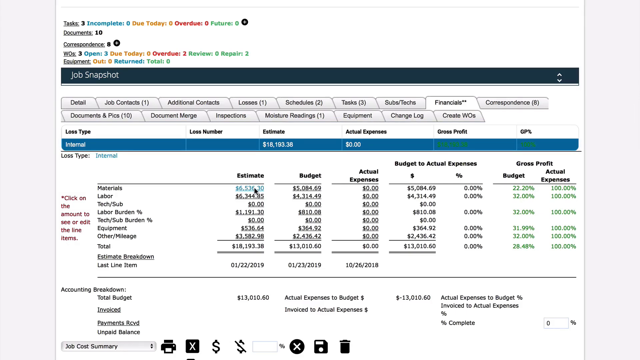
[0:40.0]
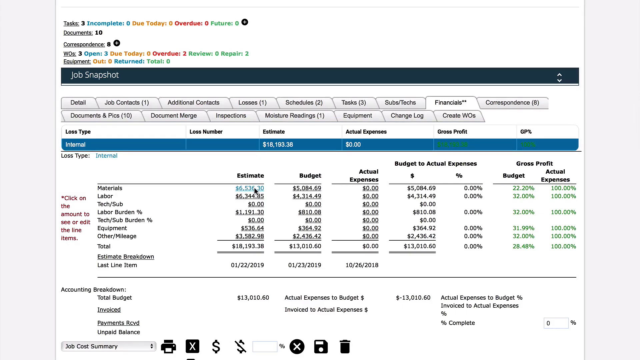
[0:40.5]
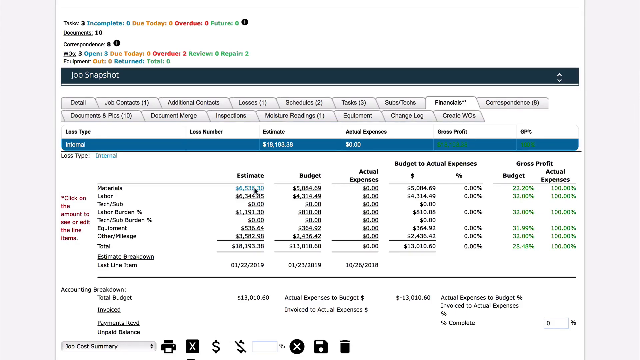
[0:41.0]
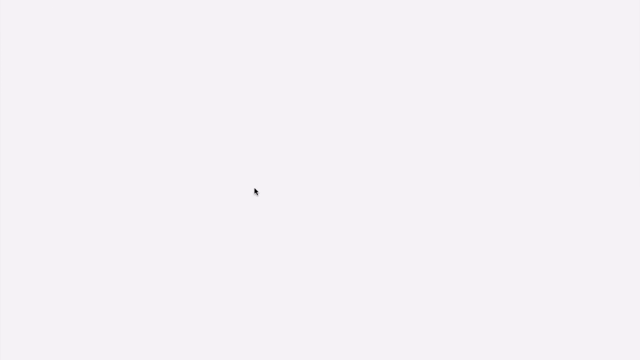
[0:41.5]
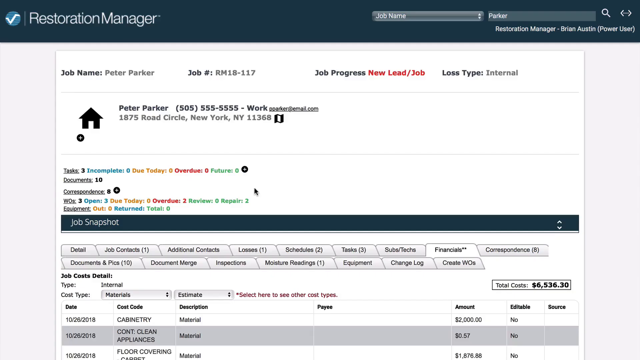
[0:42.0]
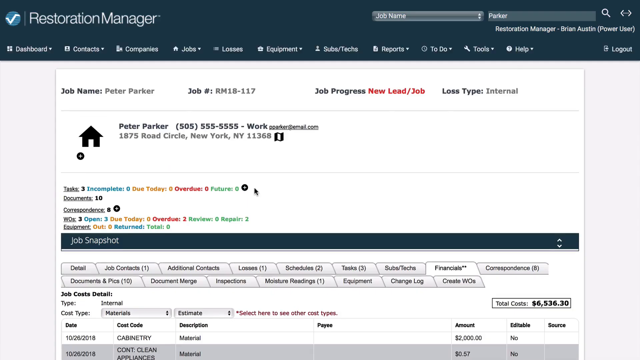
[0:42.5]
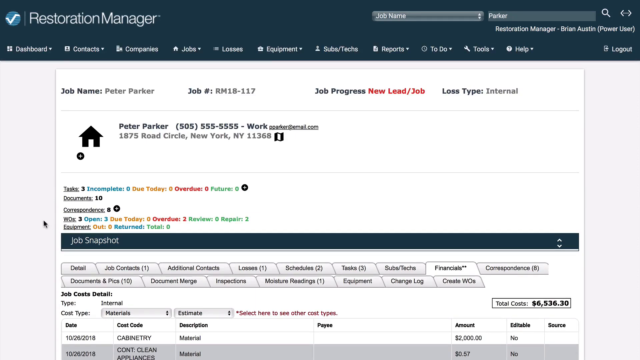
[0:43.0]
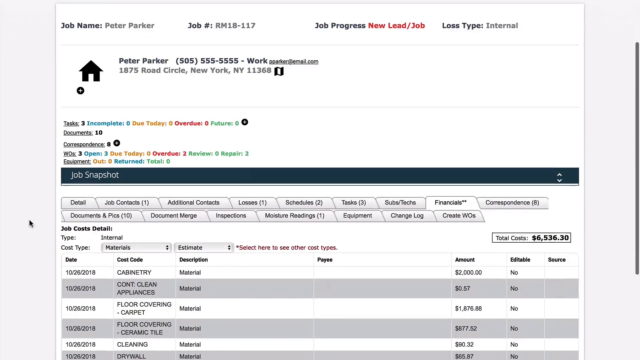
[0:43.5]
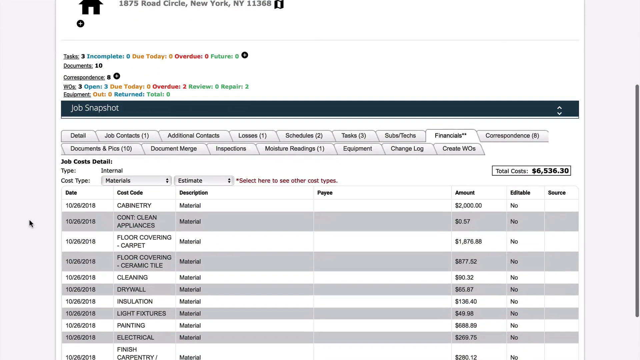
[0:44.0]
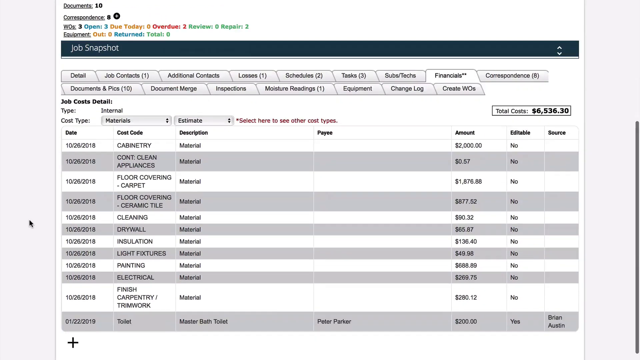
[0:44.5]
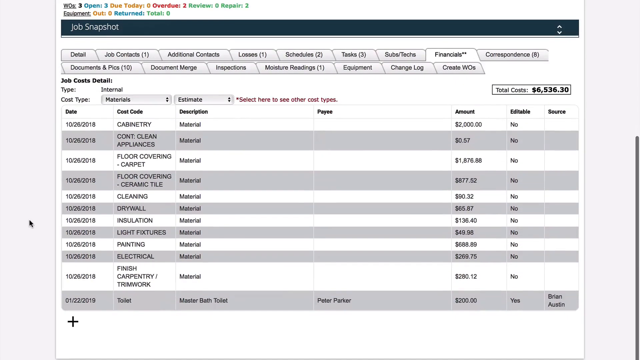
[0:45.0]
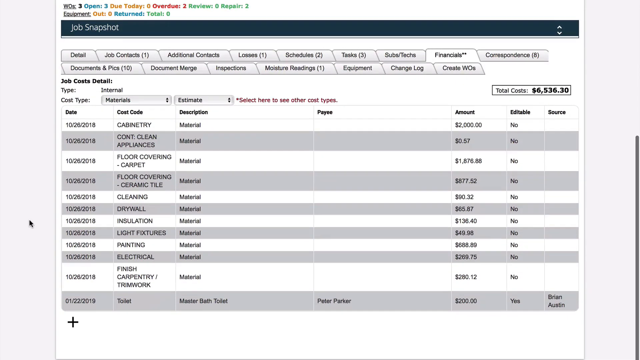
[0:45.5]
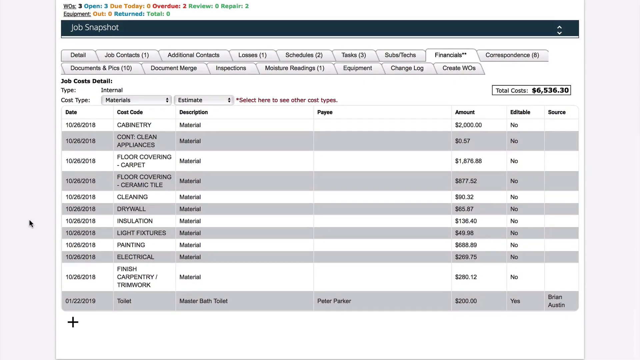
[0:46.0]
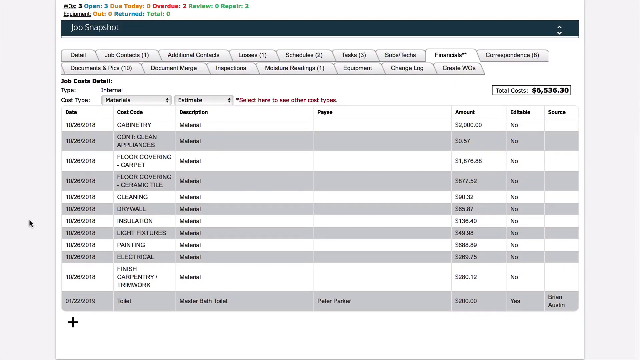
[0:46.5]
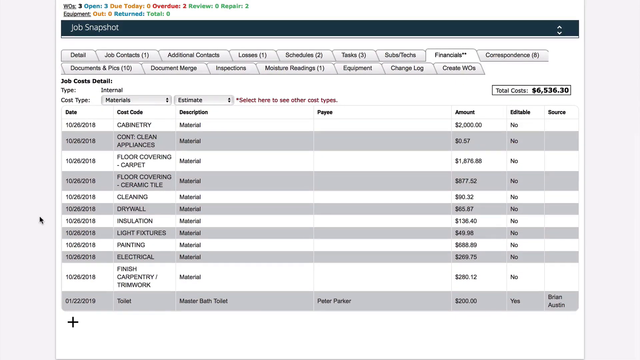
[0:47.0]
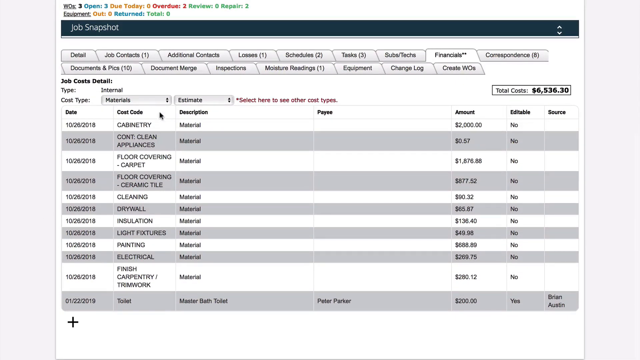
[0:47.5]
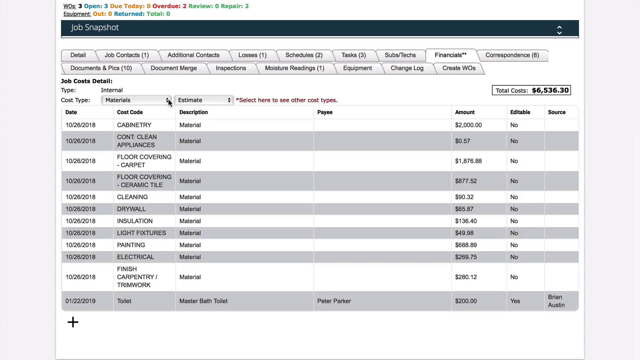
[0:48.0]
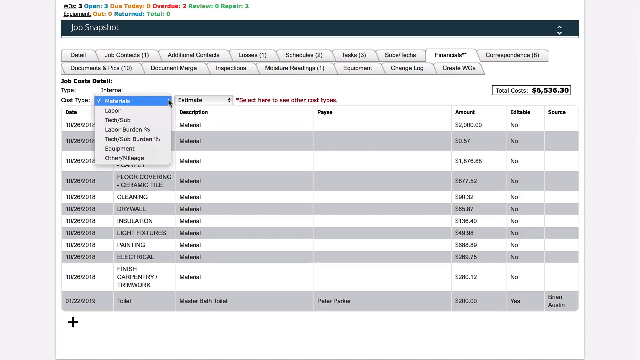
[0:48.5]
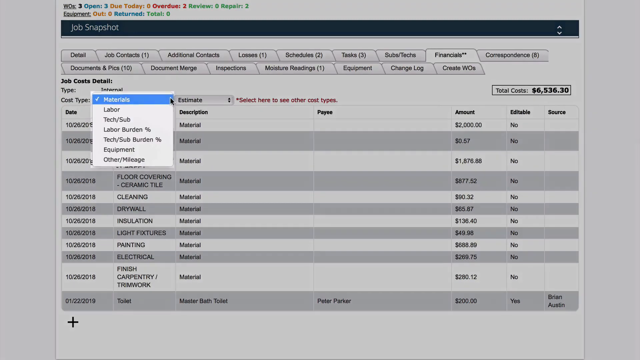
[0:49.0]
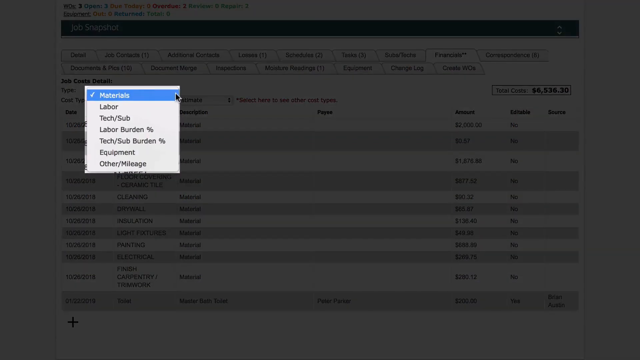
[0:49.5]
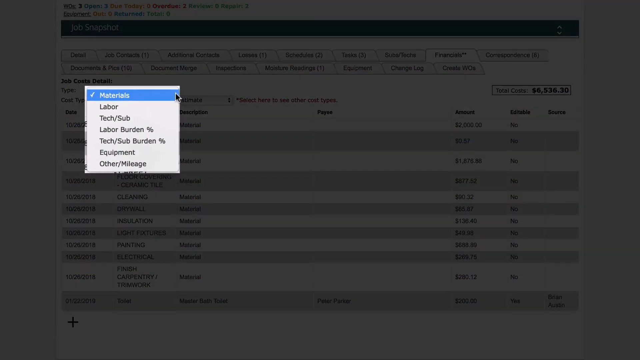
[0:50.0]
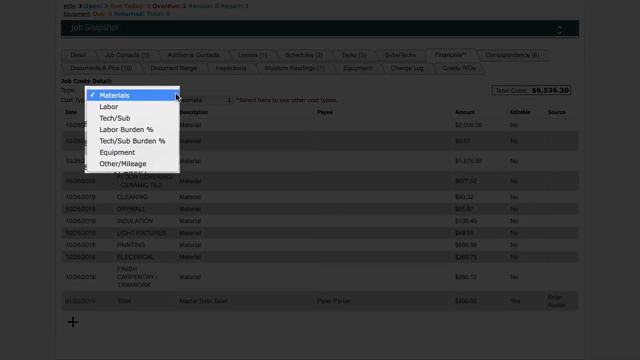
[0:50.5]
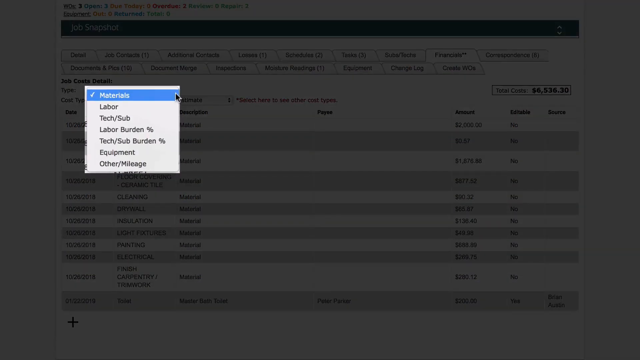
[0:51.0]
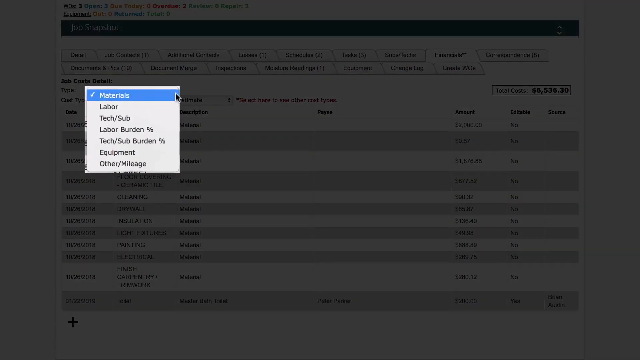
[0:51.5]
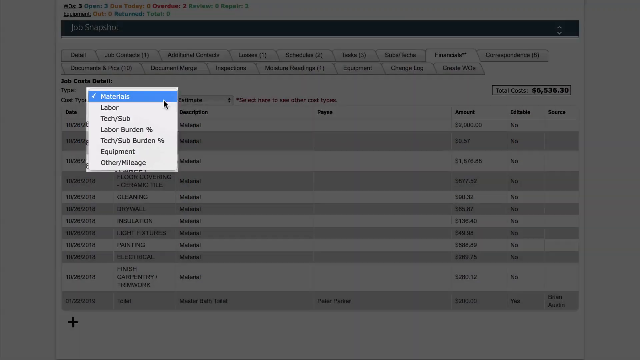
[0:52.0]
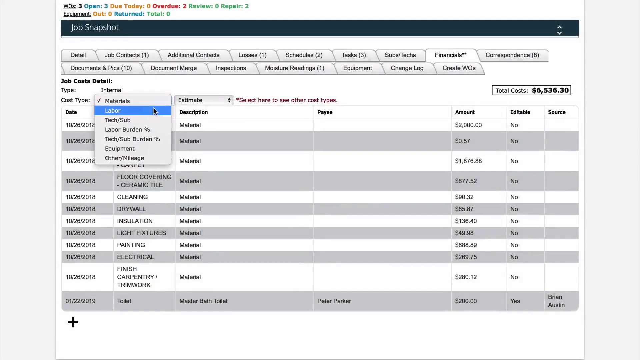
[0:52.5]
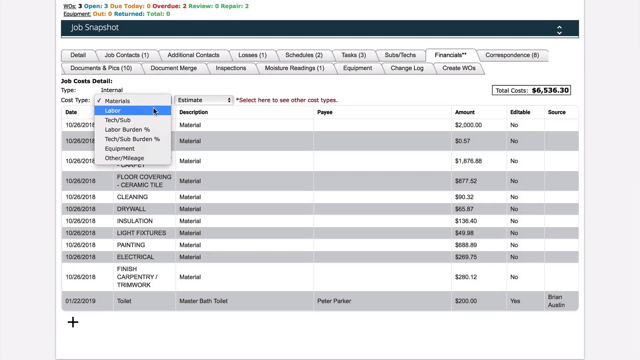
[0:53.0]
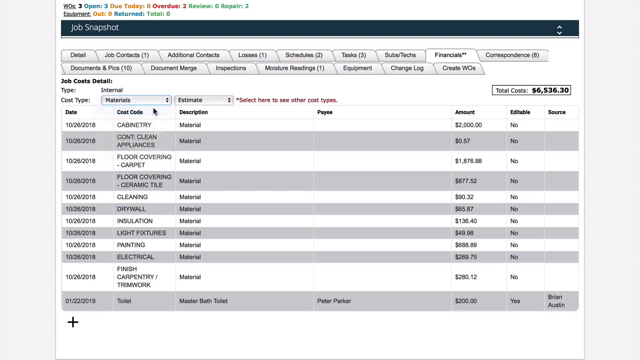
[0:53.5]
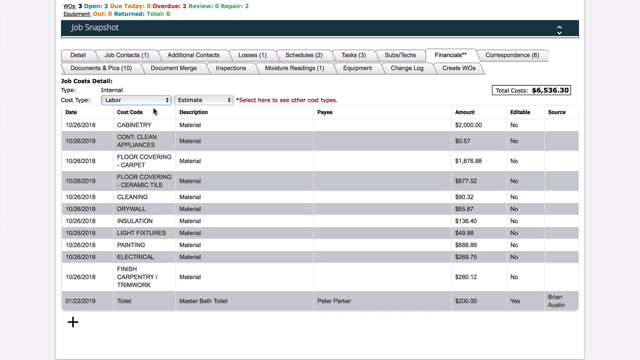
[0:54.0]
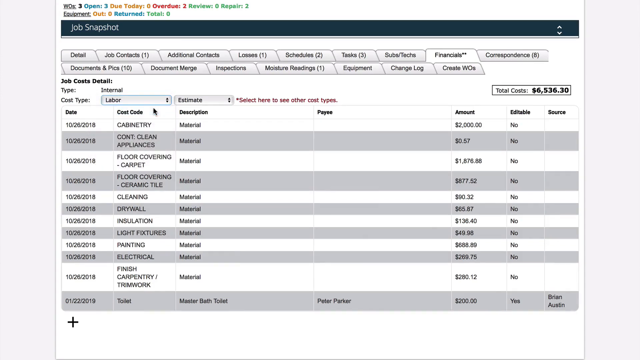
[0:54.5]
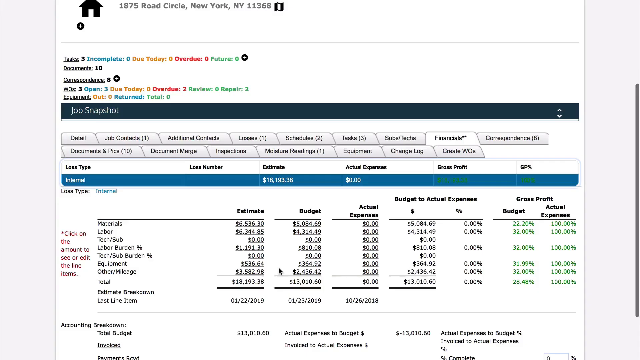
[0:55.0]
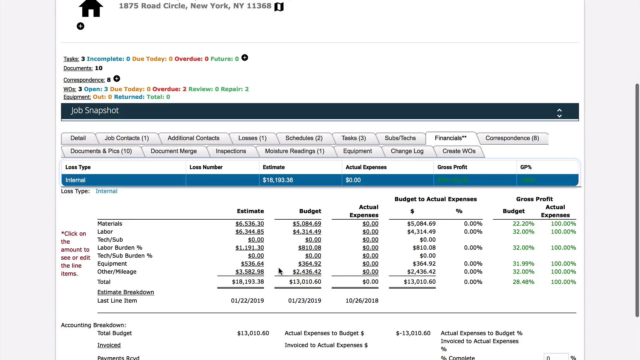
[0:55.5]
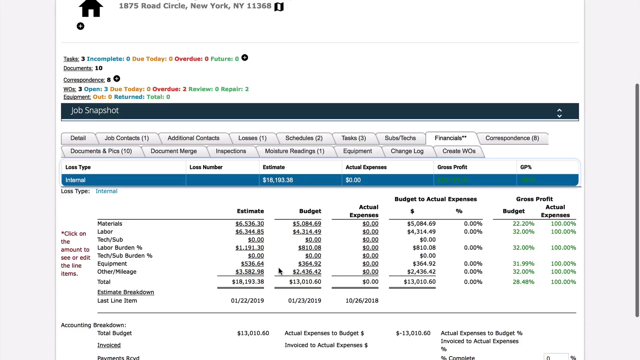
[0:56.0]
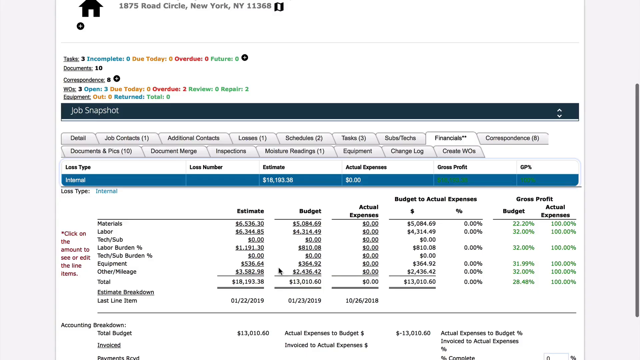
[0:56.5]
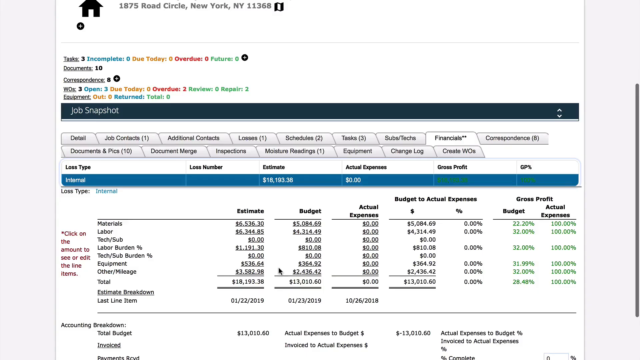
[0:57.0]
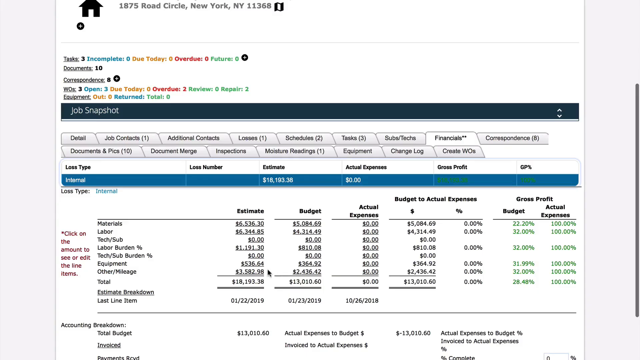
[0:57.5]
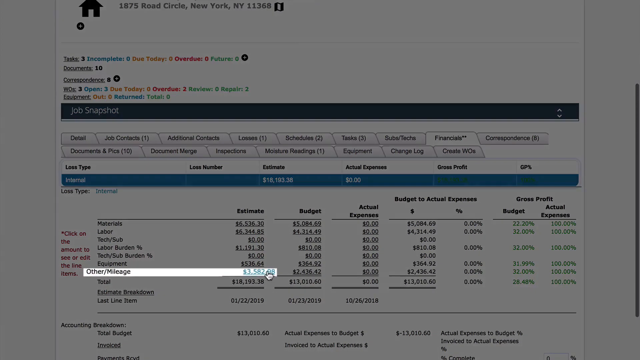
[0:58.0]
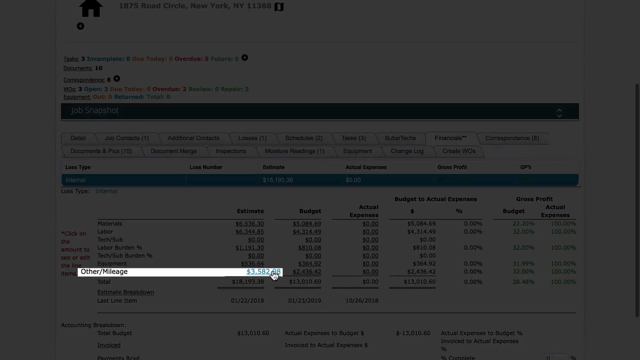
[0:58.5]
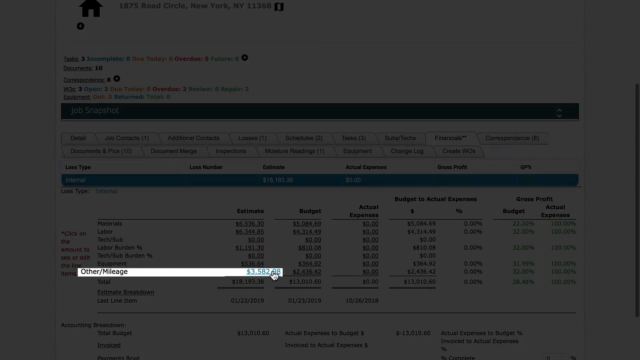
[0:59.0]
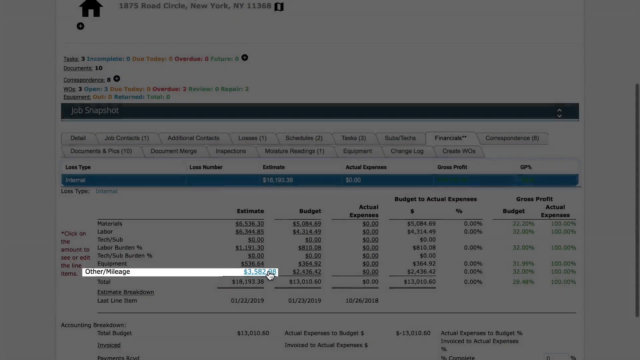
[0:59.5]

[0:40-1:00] The estimate's job snapshot shows an overview of materials and requests, a worker profile, financials, job, new lead and new estimate, and labor and material costs compared against the total budget. The dashboard lists job contract, losses, schedule, tasks and contacts. The current cost of materials is around $6,000, and the job name is Peter Parker, at 187 rules cycle, New York 13368. The task is incomplete, and documents, inspections, readings and equipment are shown. The snapshot also shows budget versus actual expenses and gross profit. The overview uses a few different colors to represent losses, gains and some of the options in the Xacware tool.